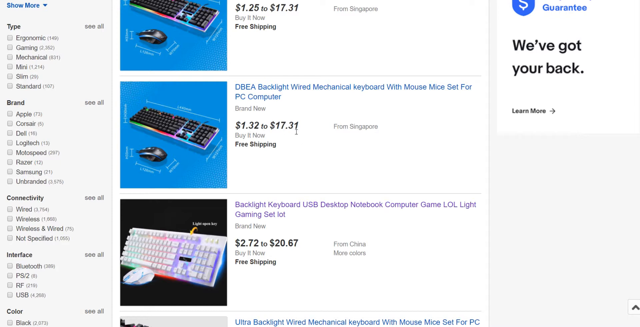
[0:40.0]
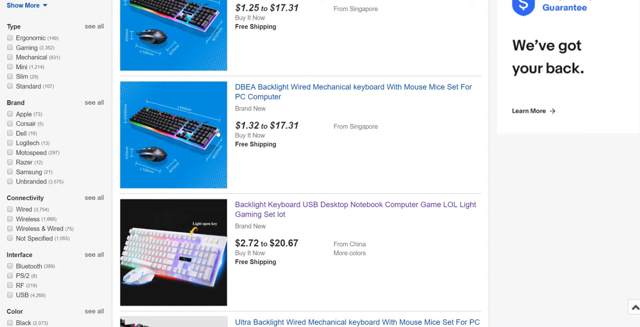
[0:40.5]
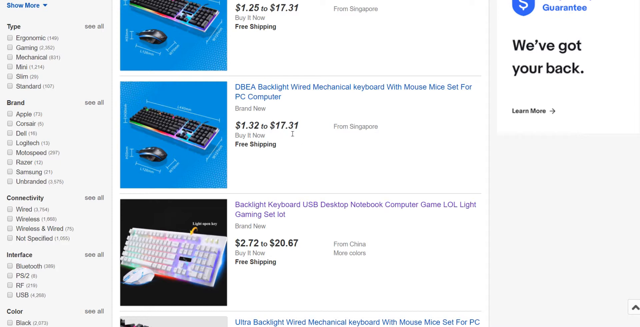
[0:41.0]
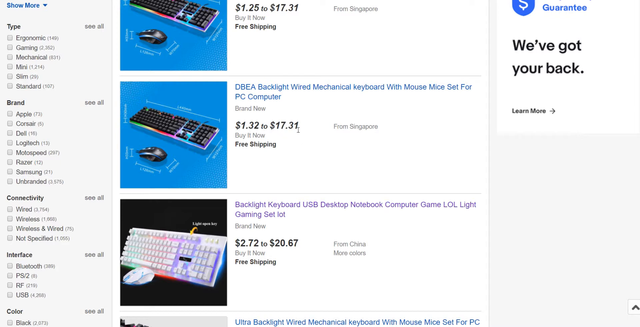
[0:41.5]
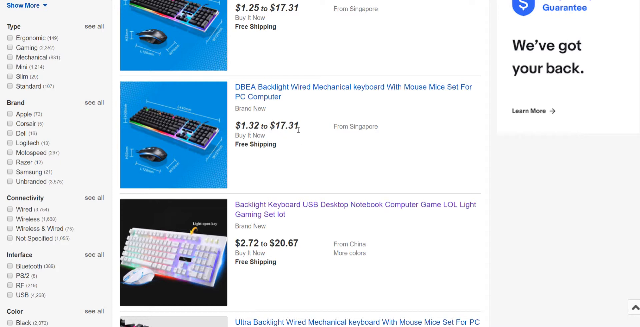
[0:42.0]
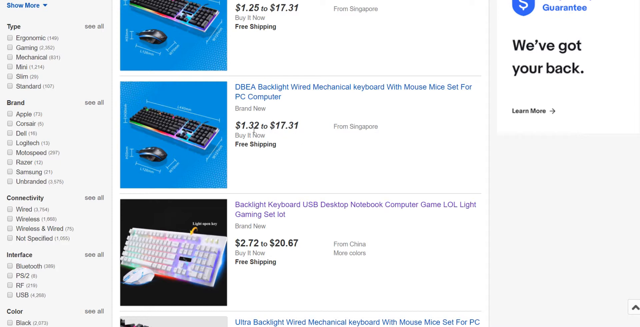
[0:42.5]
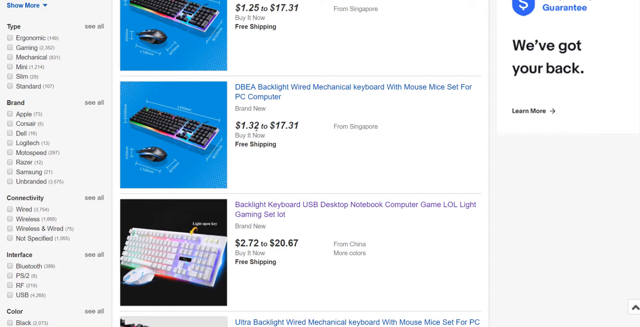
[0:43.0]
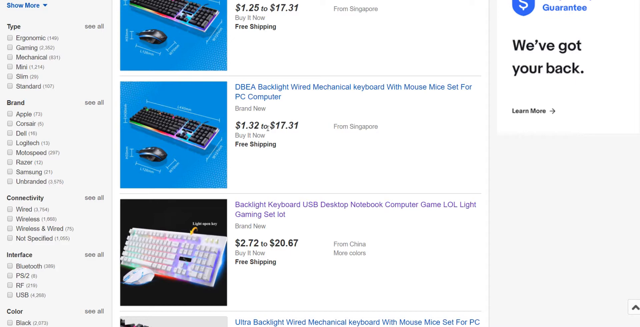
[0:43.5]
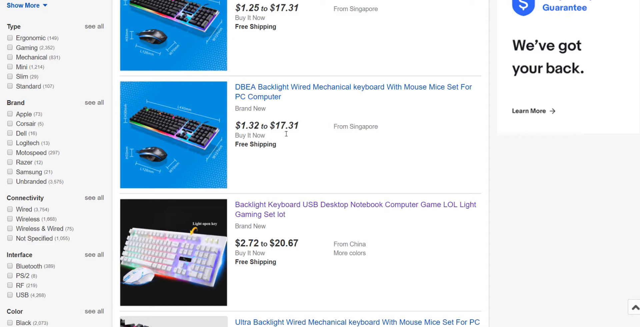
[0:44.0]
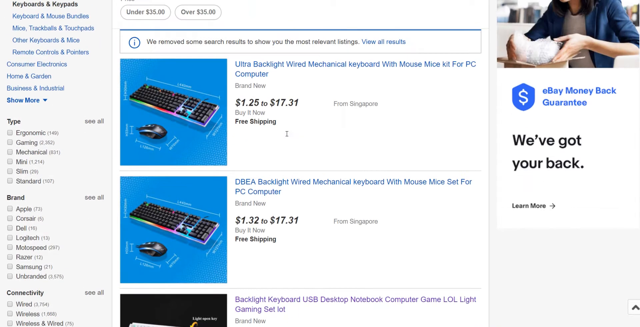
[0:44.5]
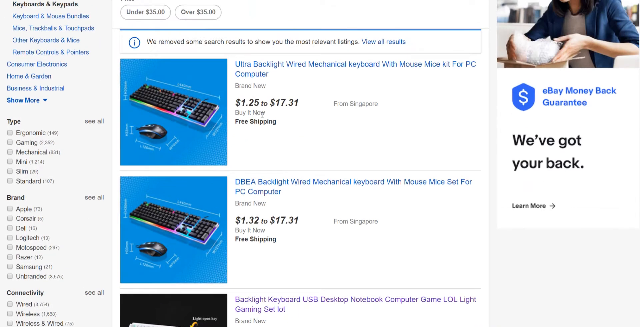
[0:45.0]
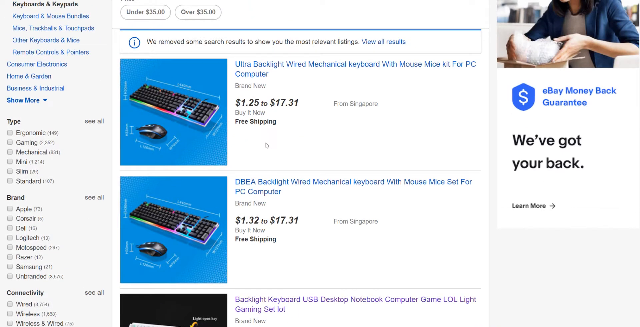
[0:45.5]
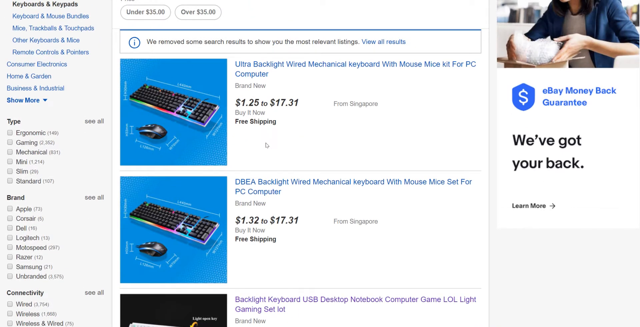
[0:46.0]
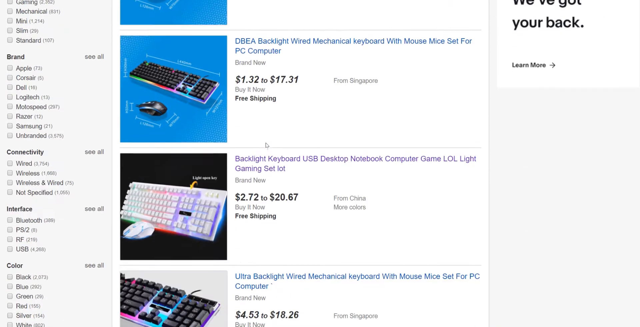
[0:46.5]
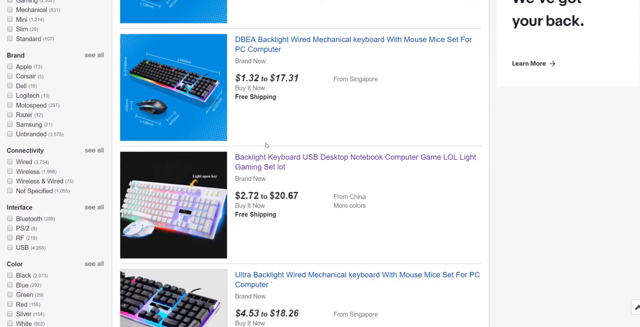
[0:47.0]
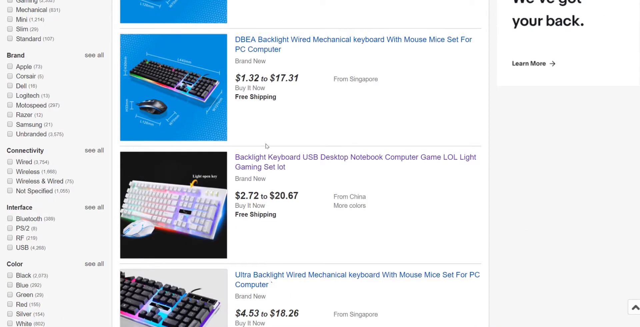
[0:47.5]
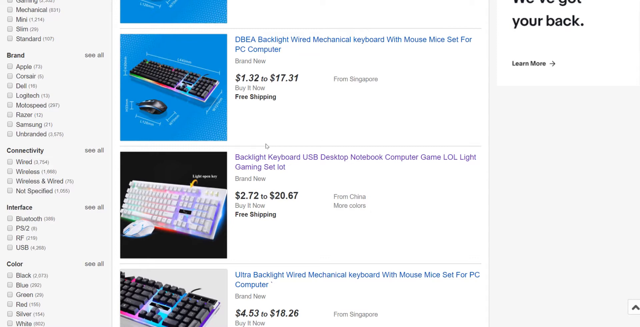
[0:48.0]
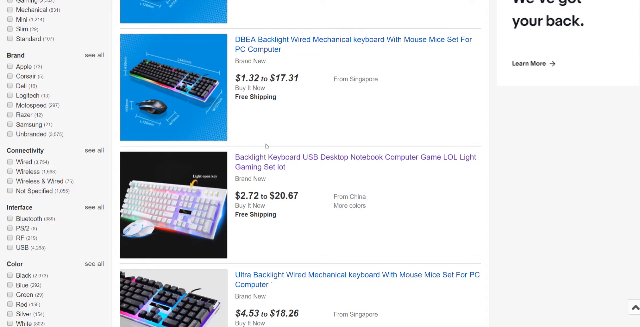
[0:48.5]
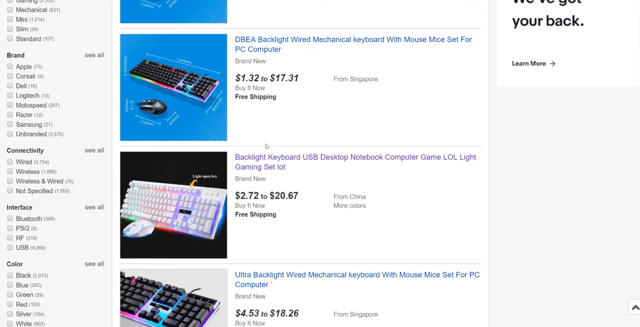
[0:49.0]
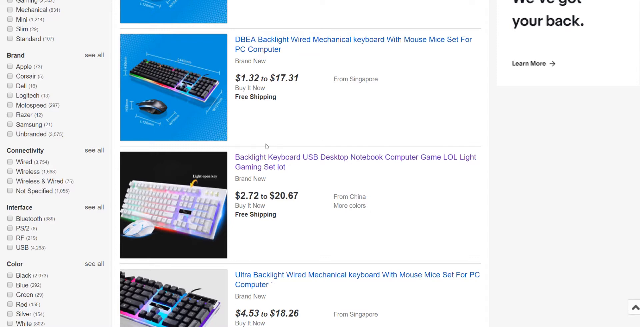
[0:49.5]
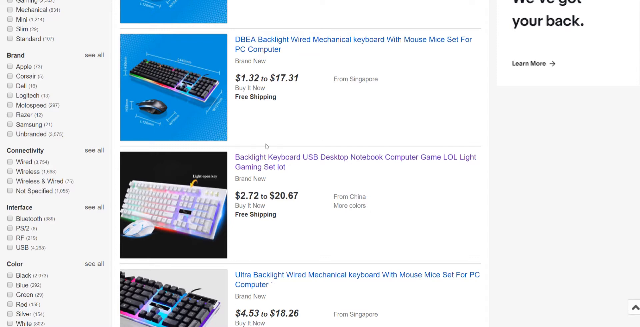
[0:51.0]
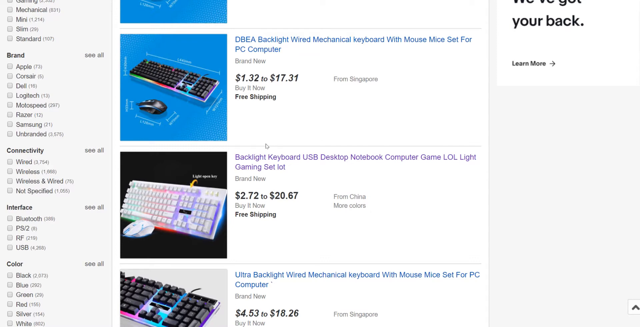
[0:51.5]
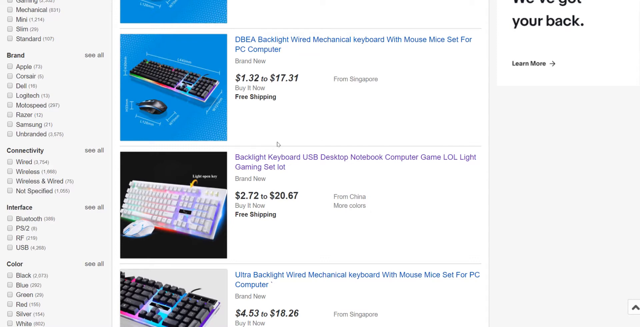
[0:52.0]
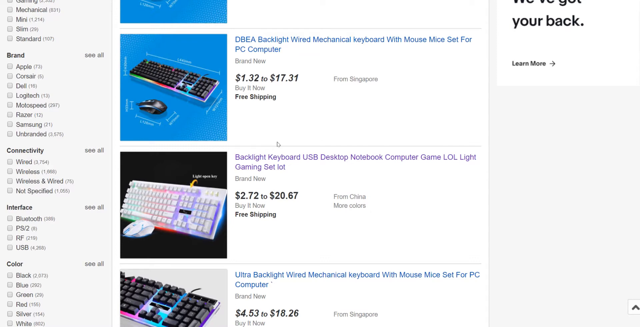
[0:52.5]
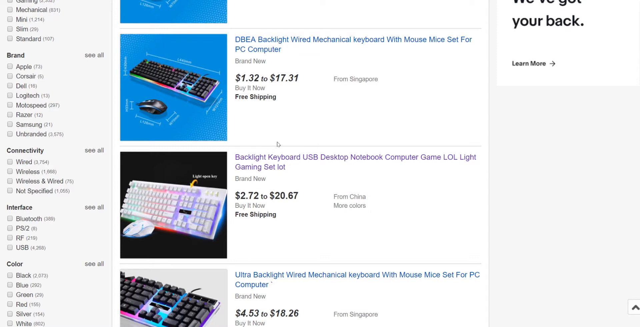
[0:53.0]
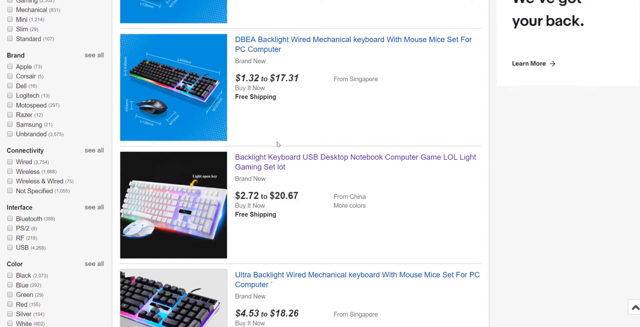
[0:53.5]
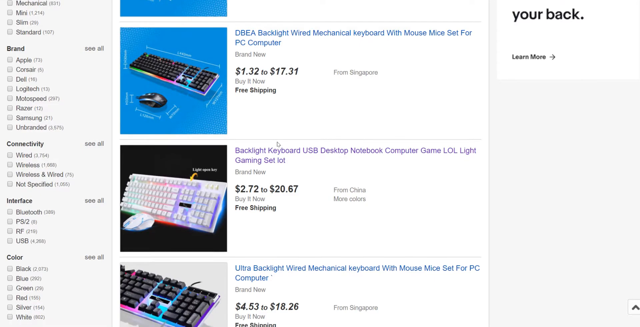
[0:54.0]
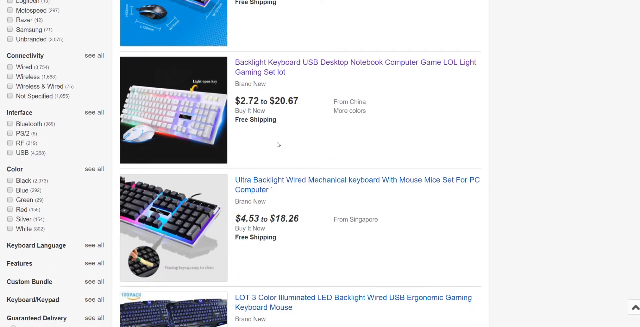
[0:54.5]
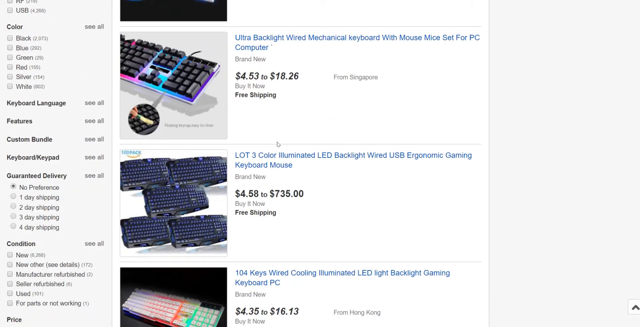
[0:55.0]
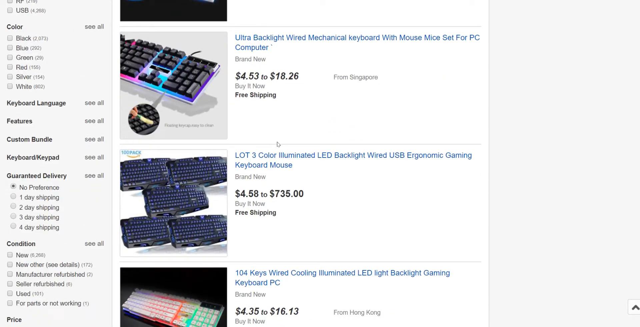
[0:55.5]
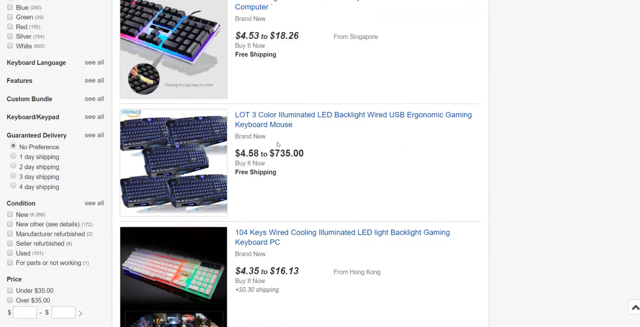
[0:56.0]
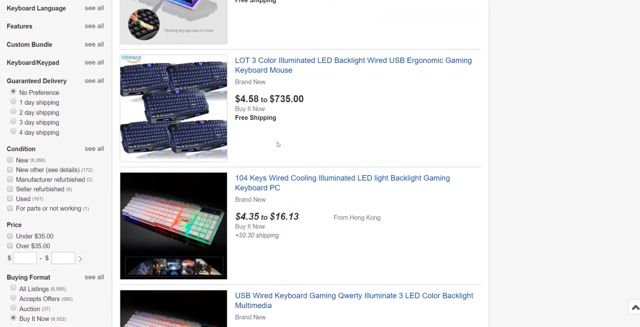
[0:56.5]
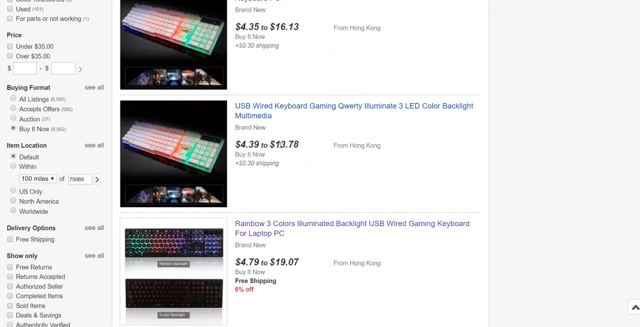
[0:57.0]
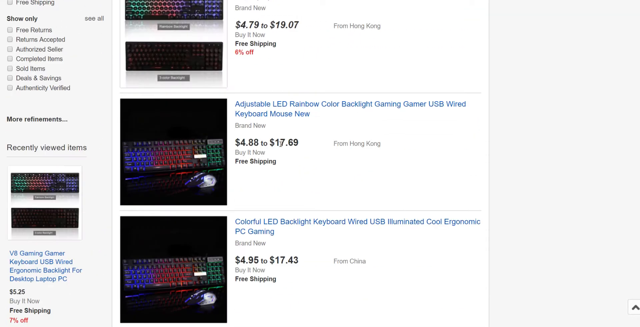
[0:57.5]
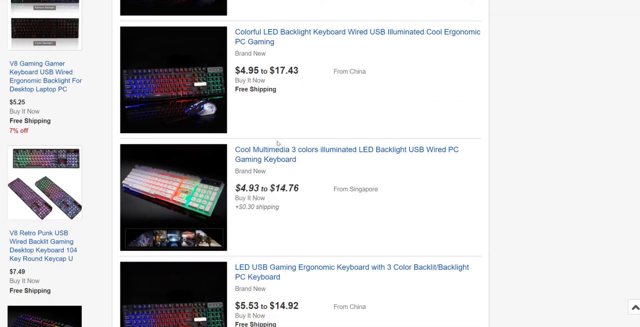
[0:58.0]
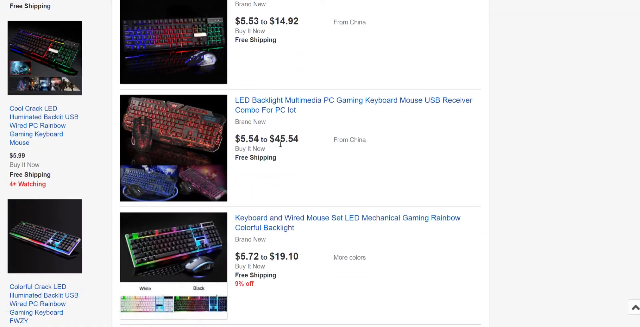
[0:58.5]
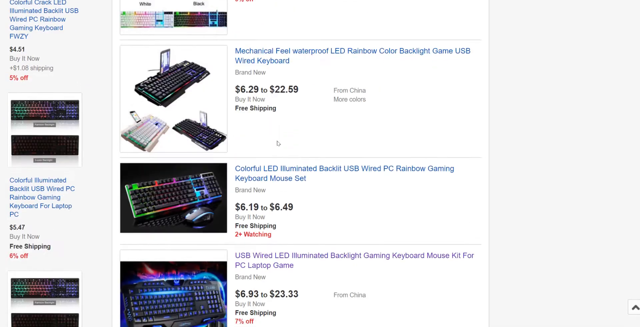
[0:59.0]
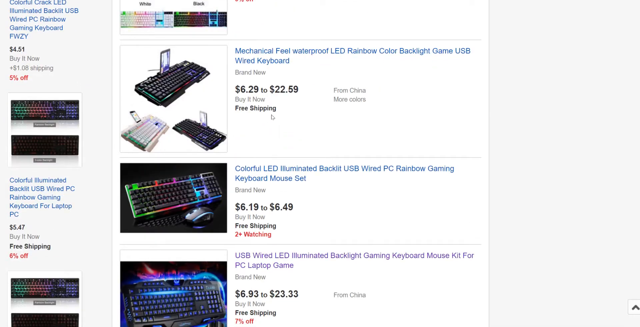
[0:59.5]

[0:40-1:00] The person scrolls up to the same picture but a different listing for that keyboard, again moving the mouse back and forth over the different price options for that listing. They then scroll down continuously through the many listings of backlit keyboards. Some have black keys while others are all white; some include a mouse while others do not; some have very bright, rainbow-type colors for their display. The items ship from a variety of places, including Singapore and China. Prices range widely, with most starting at a dollar or two and going up to a much larger range. The person seems to be showing how many options come up under the chosen fields.